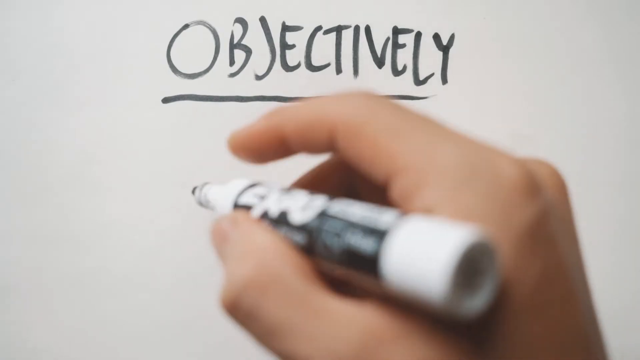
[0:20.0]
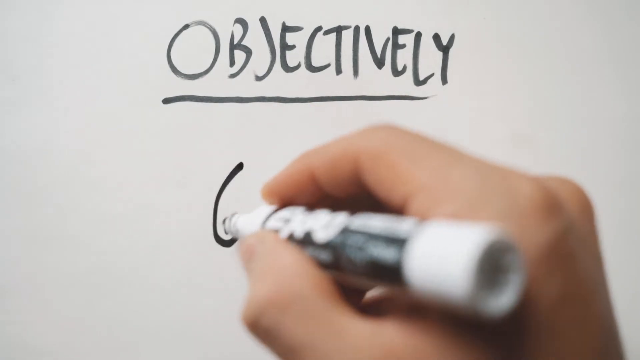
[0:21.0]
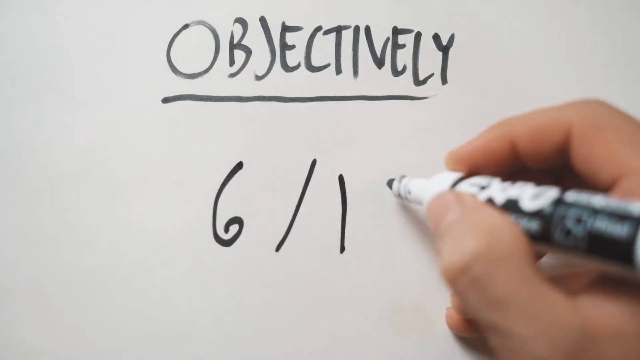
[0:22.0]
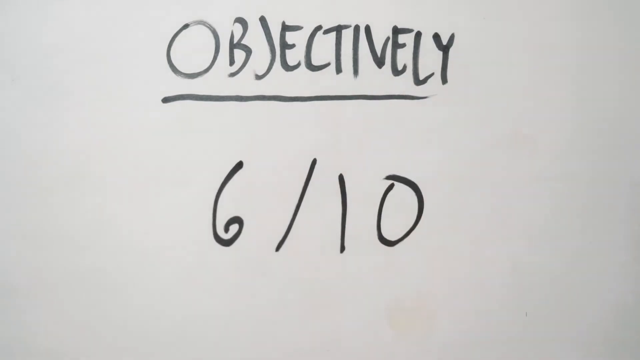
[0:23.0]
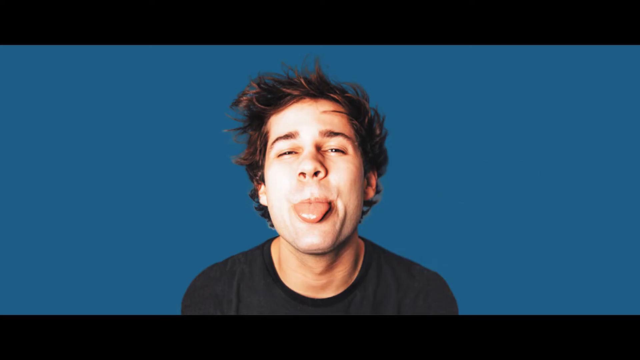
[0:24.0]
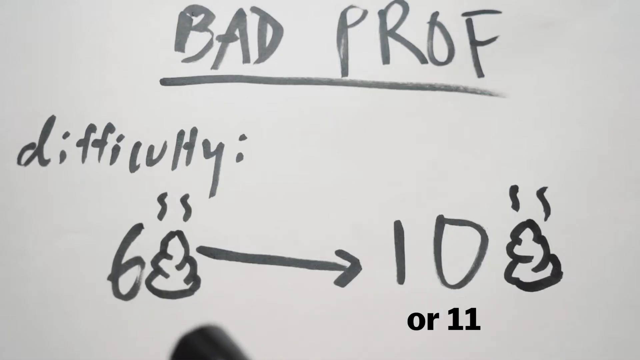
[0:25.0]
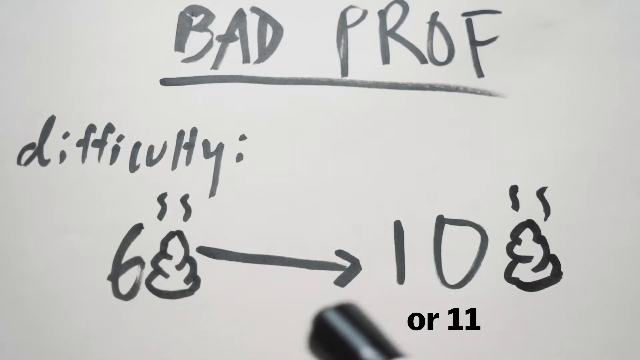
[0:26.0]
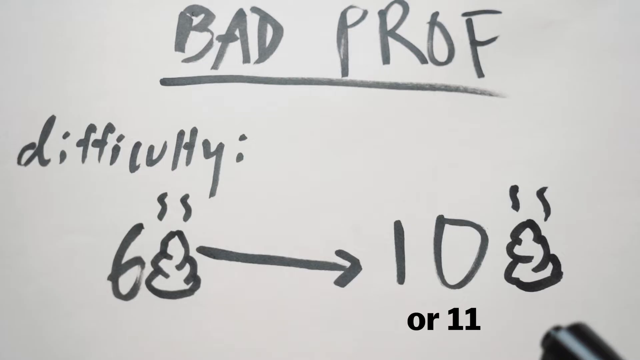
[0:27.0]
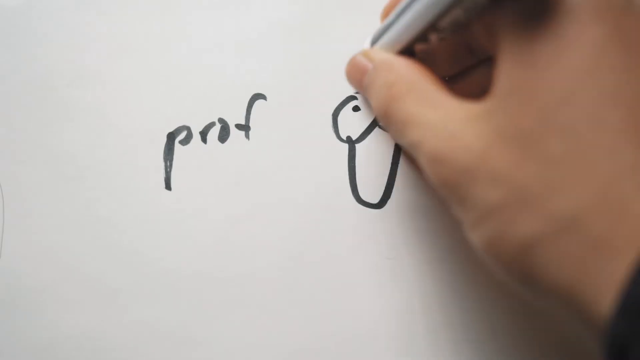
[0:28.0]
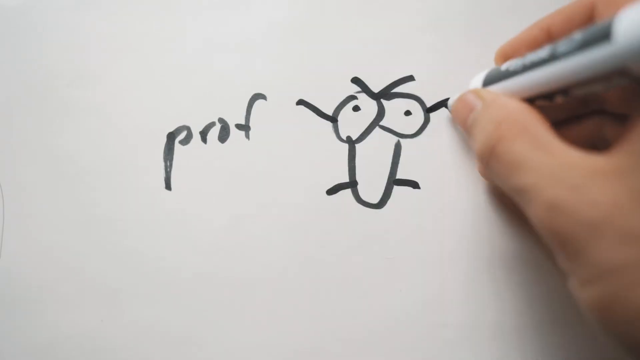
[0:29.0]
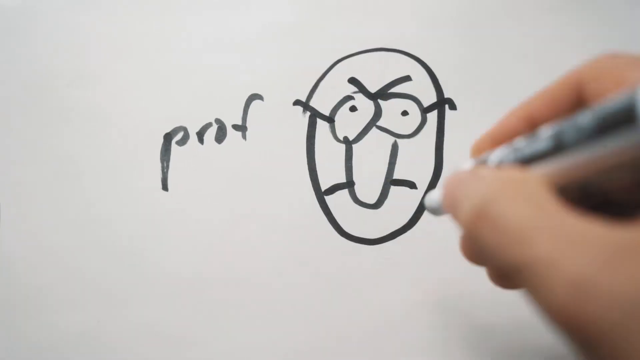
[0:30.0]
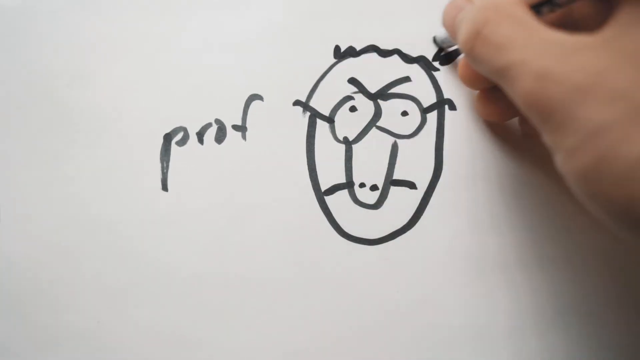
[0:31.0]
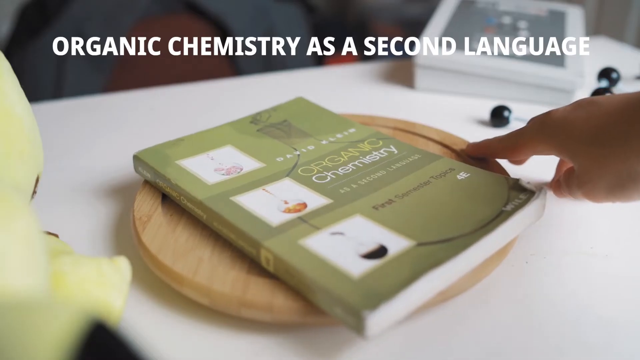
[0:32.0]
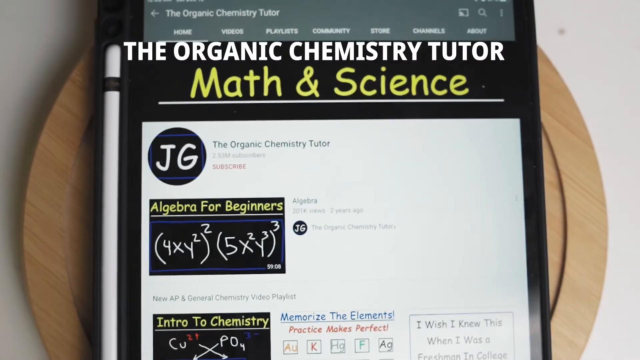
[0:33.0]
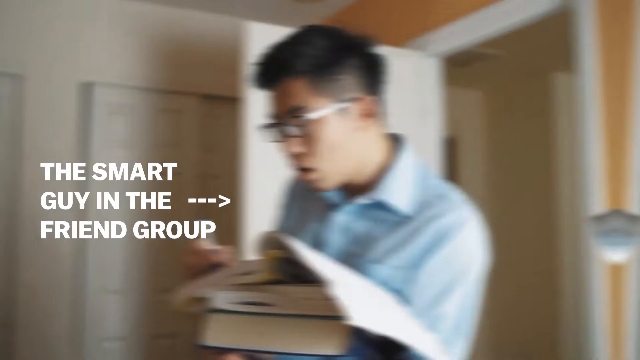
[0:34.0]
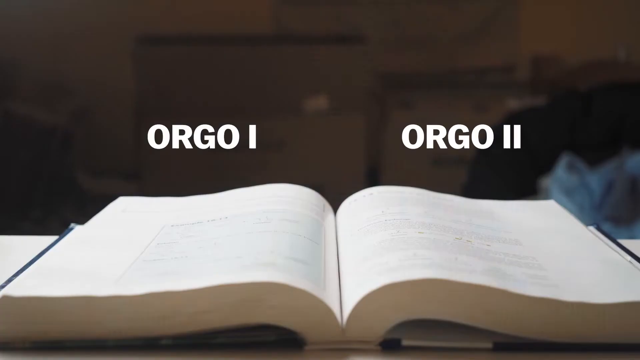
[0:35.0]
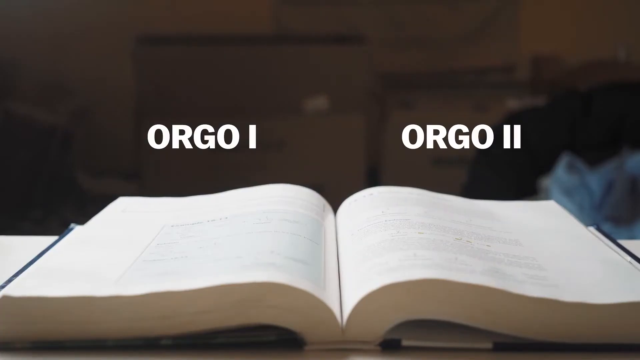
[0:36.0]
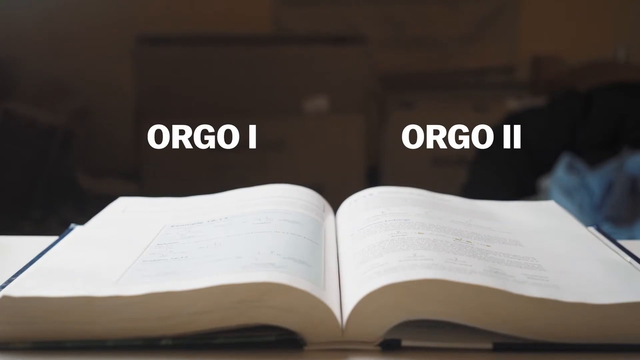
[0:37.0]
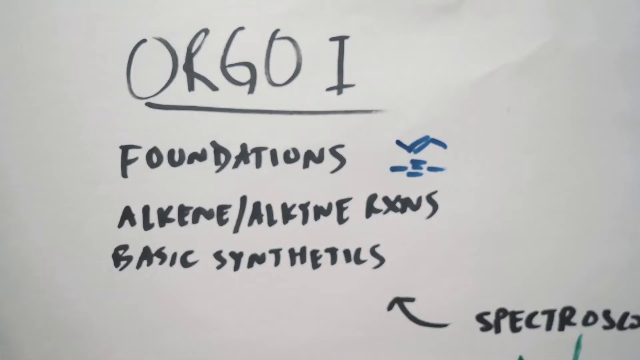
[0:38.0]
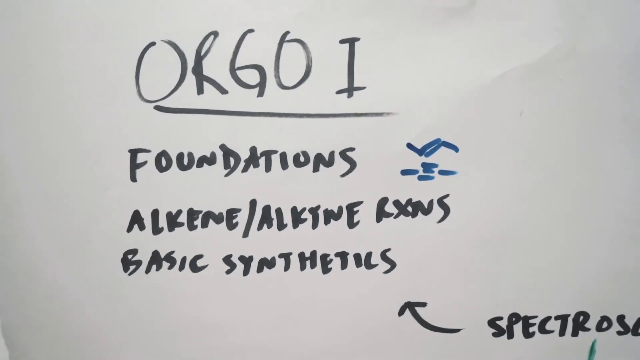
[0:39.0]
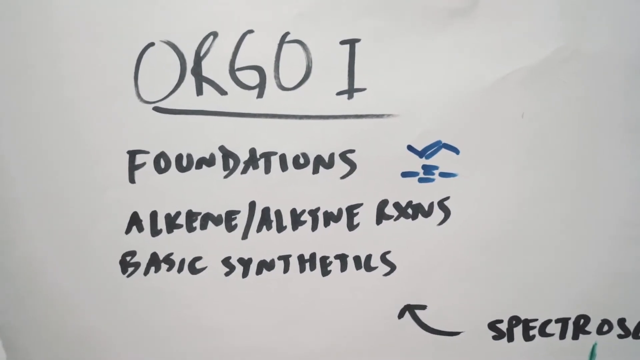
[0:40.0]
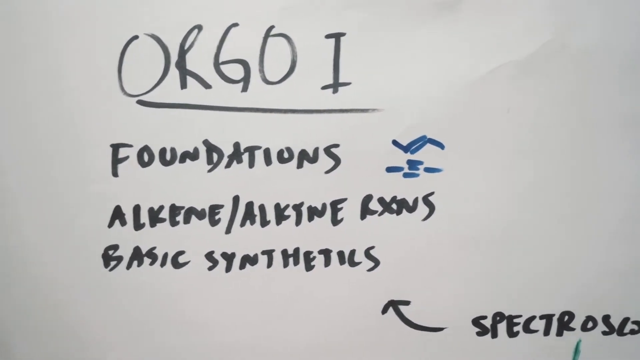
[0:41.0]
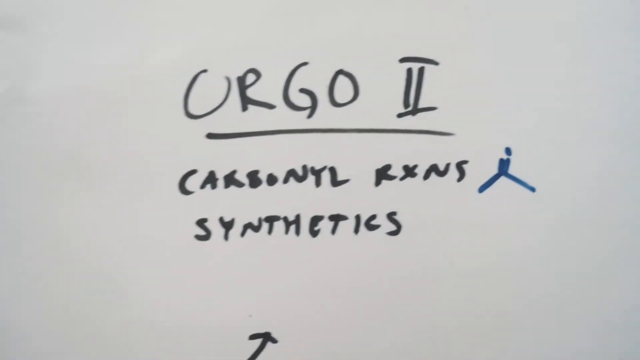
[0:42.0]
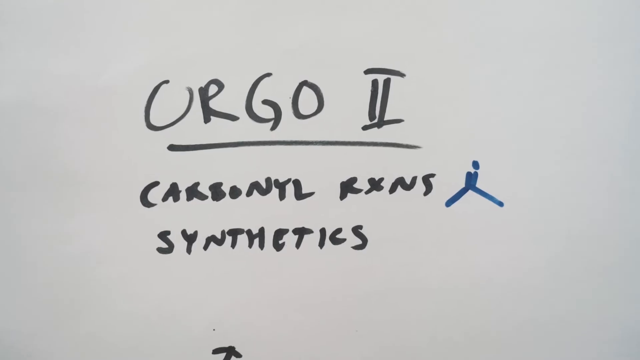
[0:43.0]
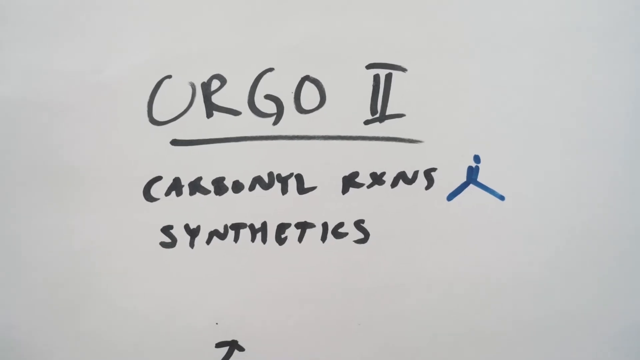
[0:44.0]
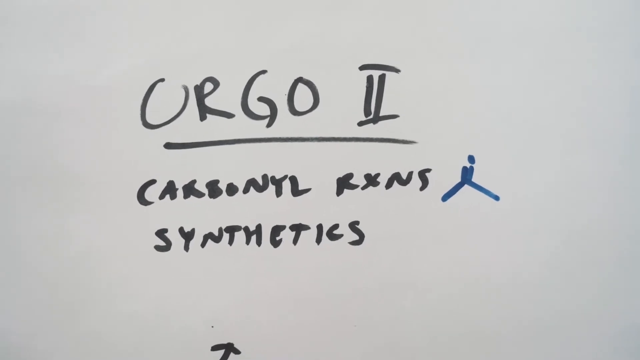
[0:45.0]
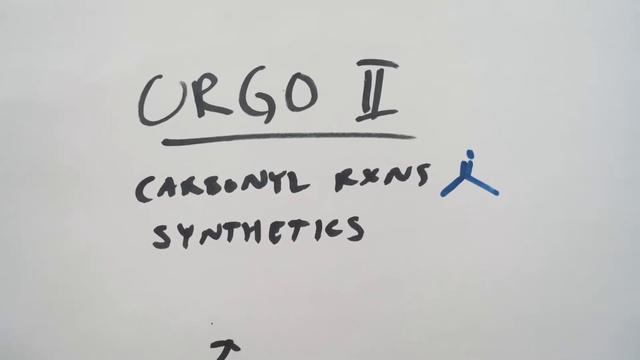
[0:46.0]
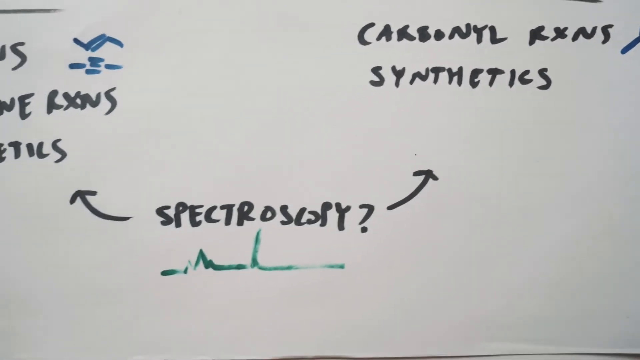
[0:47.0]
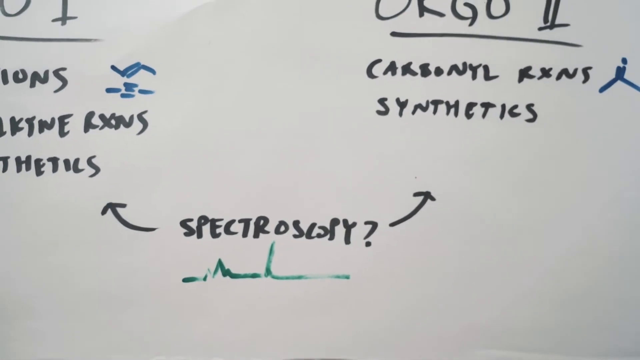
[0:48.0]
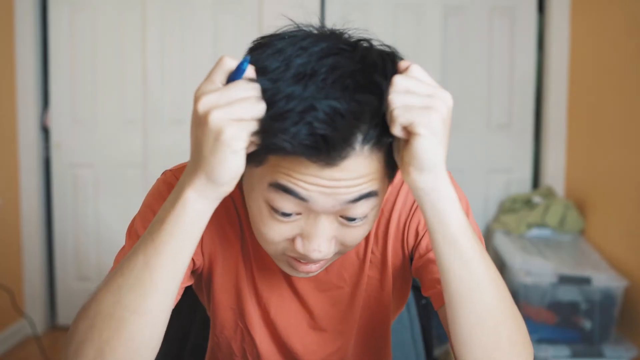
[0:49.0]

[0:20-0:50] A hand with a marker writes "objectively 6 tenths" on a white chalkboard. A picture of a man with his tongue out against a blue background appears with the text "some may even say 5 to 10". Back at the chalkboard, the writing reads "bad prof, difficulty equals to 6" next to a drawing of what seems to be some kind of poop, then an arrow pointing to the right with "10" and another drawing of poop, with "or 11" written below it. The hand draws an angry face with the word "prof" beside it, then the words "organic chemistry as a second language" appear. The organic chemistry tutor is then shown, and many things appear on the screen about orgo 1 and orgo 2.